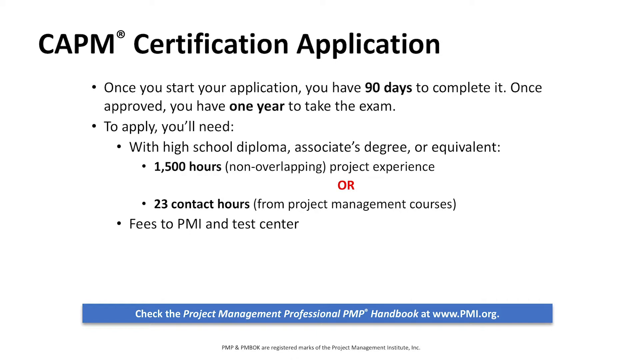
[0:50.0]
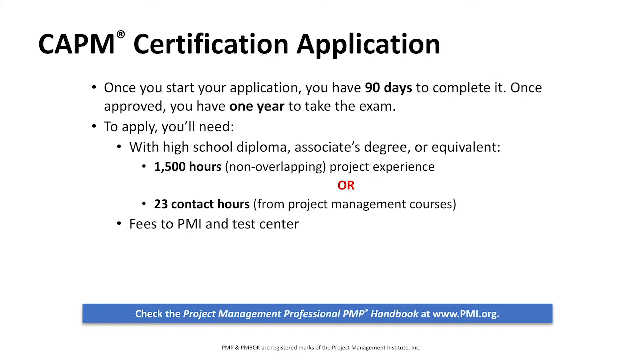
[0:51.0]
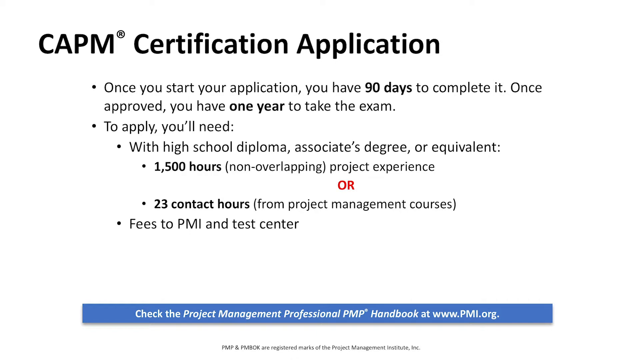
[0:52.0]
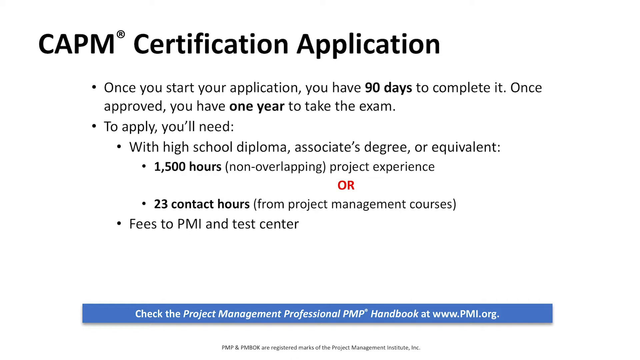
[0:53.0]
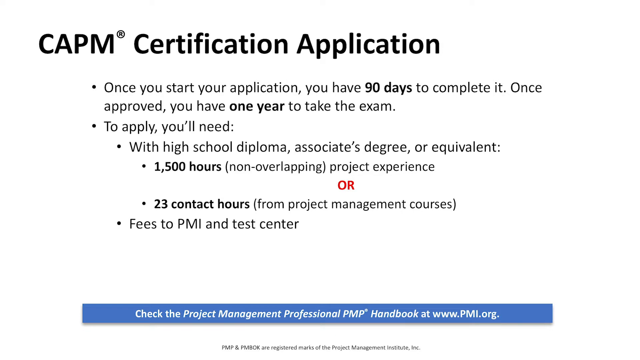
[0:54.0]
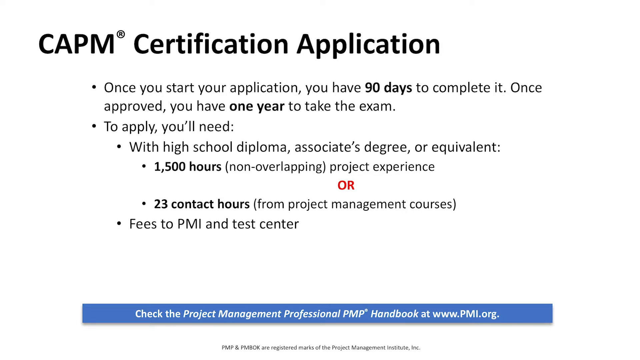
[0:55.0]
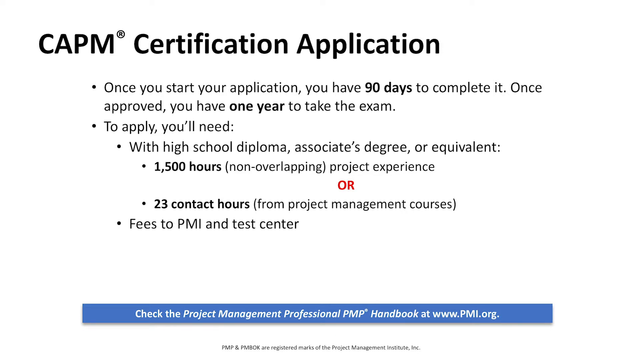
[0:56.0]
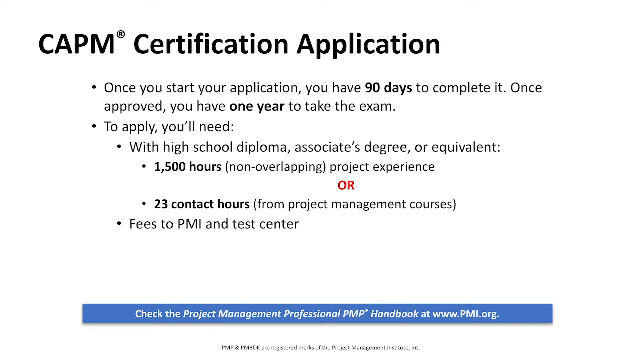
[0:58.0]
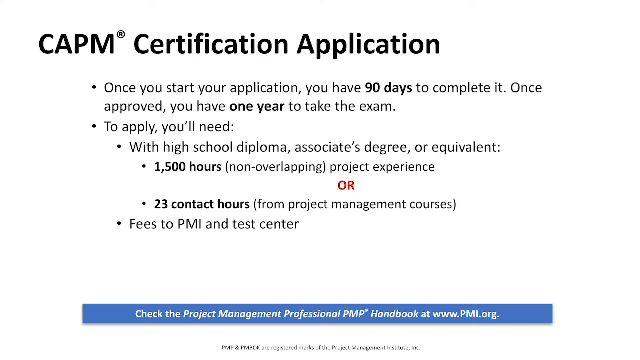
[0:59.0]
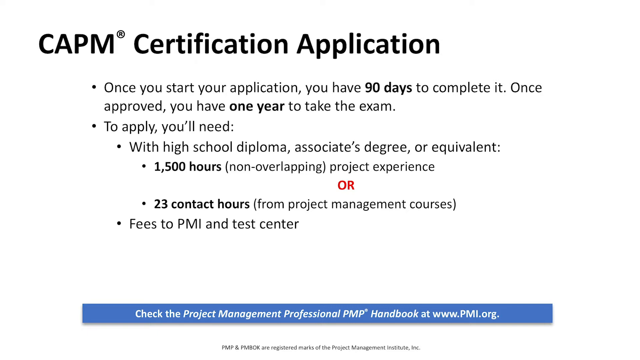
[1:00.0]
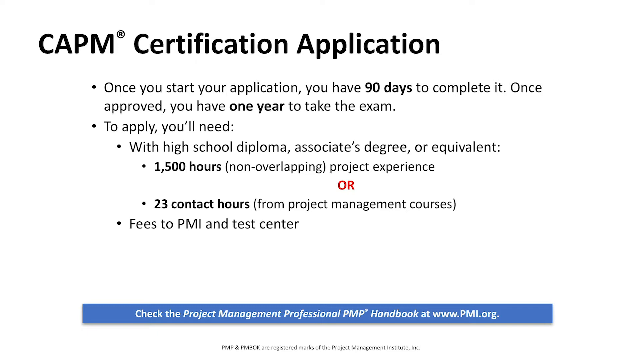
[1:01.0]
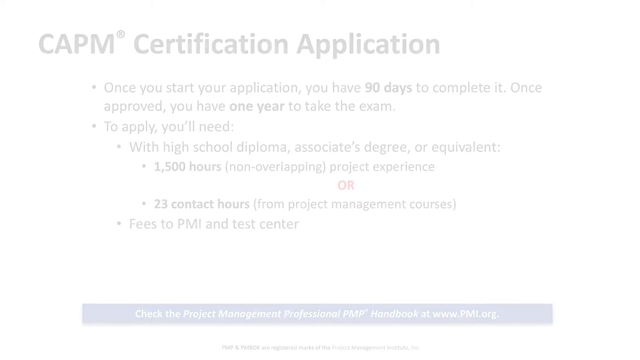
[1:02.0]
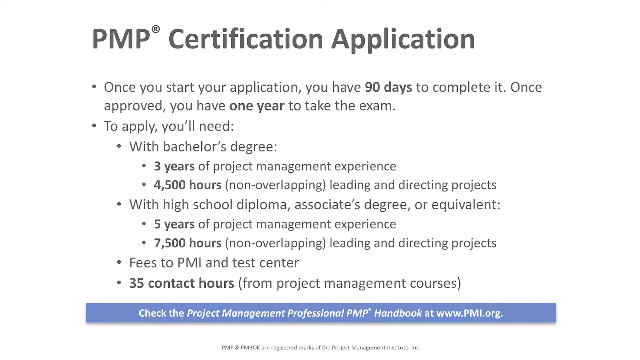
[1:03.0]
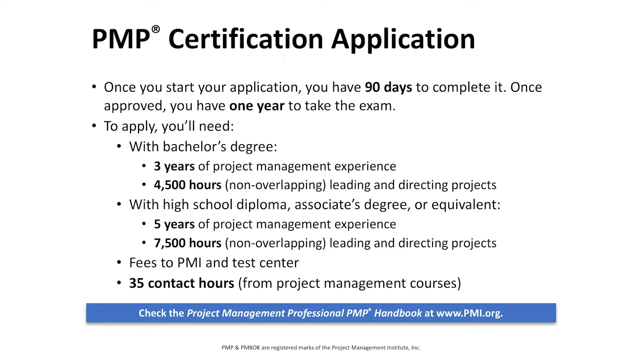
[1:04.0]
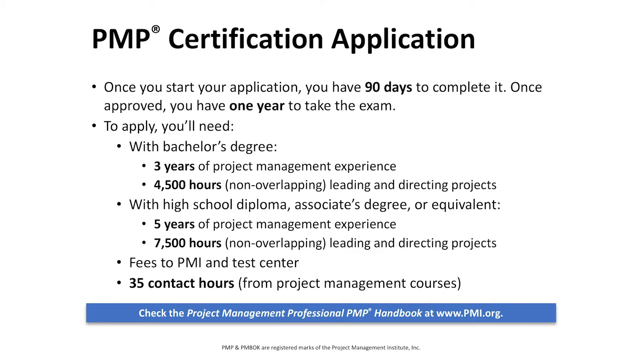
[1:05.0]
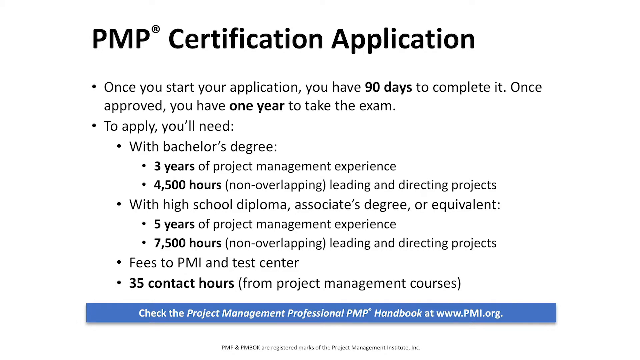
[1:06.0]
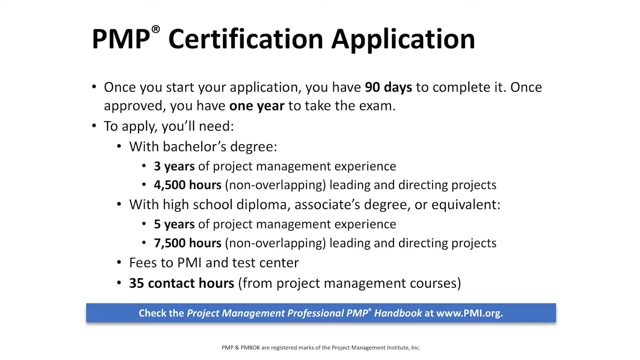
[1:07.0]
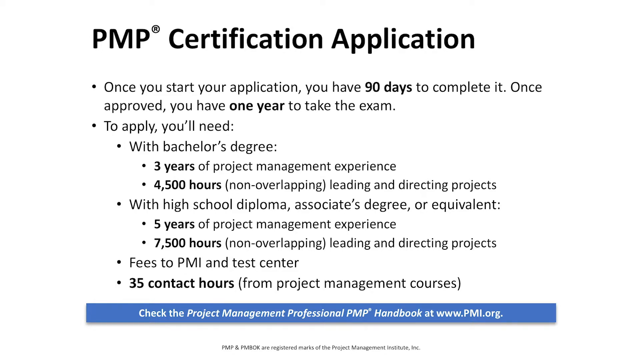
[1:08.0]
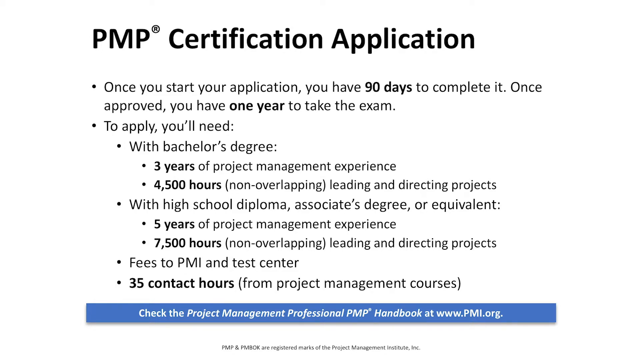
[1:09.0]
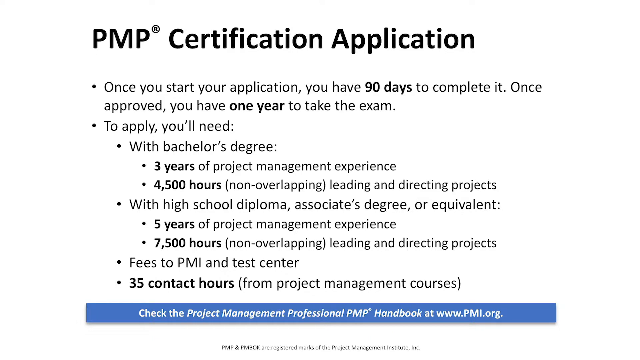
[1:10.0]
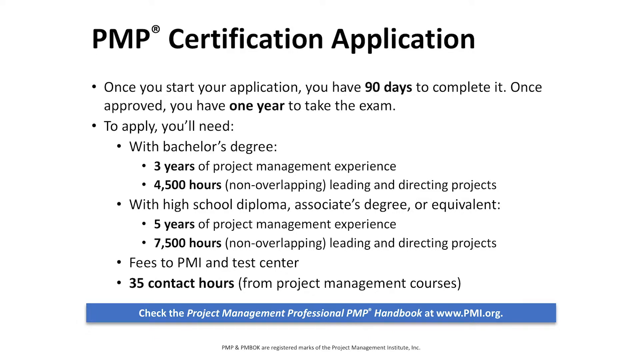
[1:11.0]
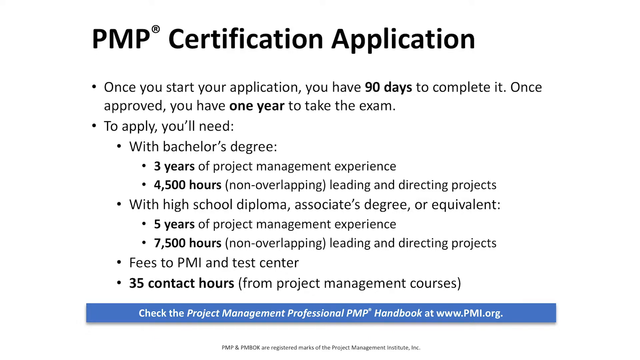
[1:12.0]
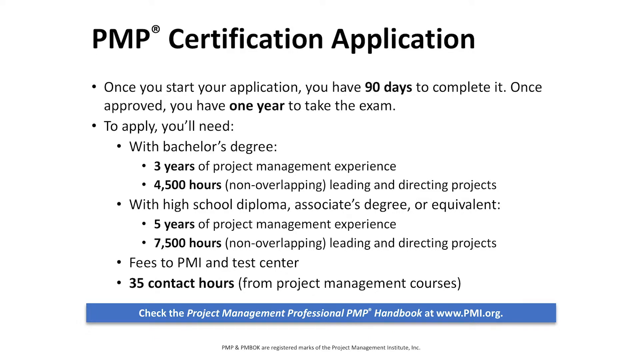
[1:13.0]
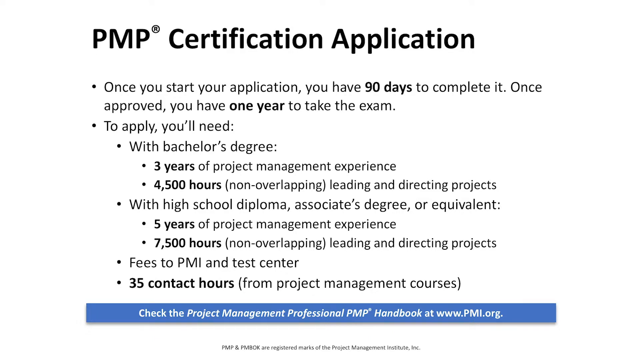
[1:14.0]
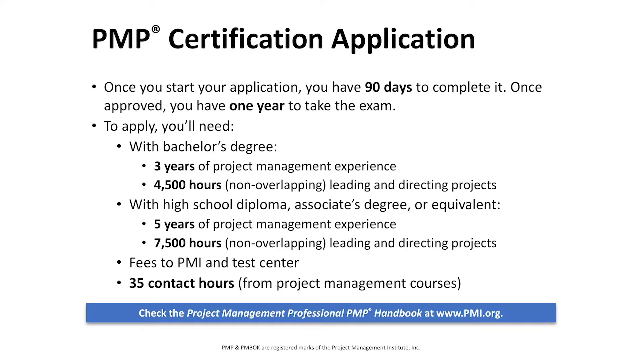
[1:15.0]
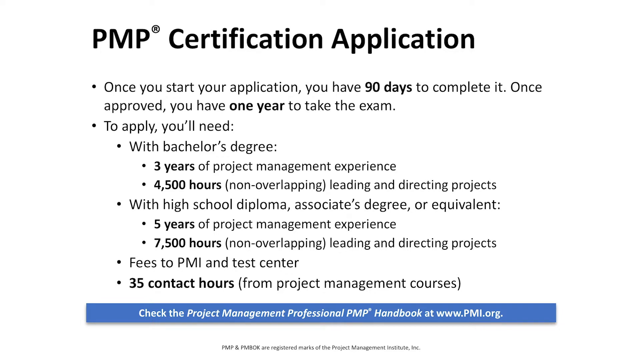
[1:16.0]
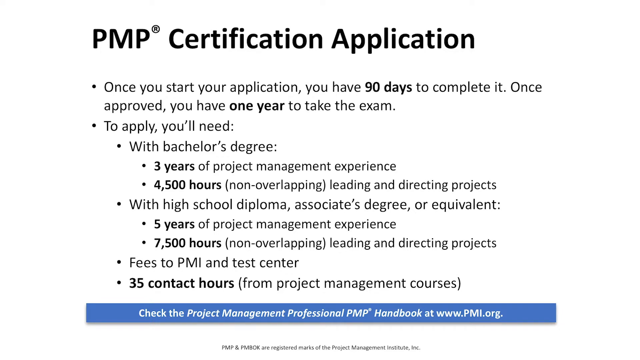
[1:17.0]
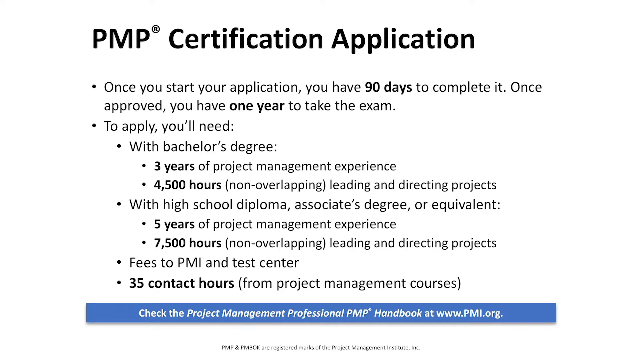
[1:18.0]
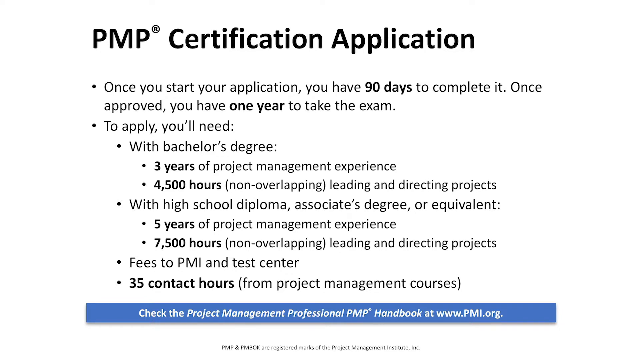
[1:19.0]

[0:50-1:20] The same CAPM certification application information remains on screen, apparently while Chris reads through it. Another slide then appears, also headed "CAPM certification application" in bold black font, with ten bullet points of information. Parts of the text are in bold black font, such as "90 days", "1 year", "3 years", "4,500 hours", "5 years", "7,500 hours" and "35 contact hours", while the rest is in a normal black font. Below, the text "check the project" is in white on a blue background, and more information appears further down.